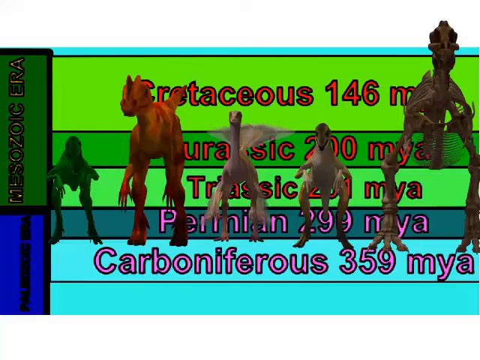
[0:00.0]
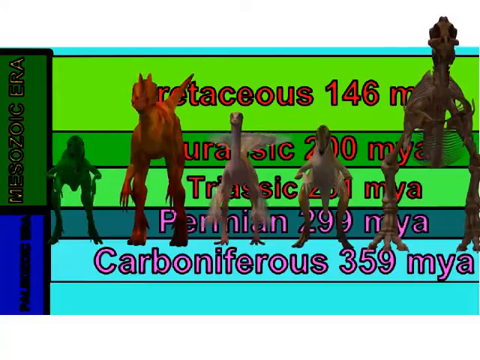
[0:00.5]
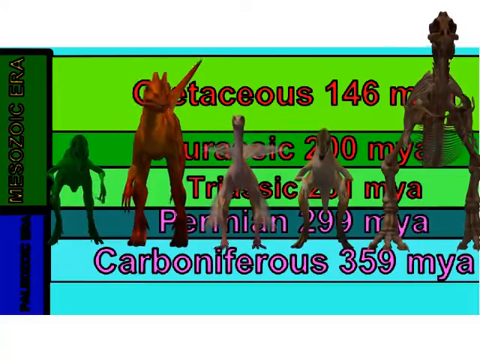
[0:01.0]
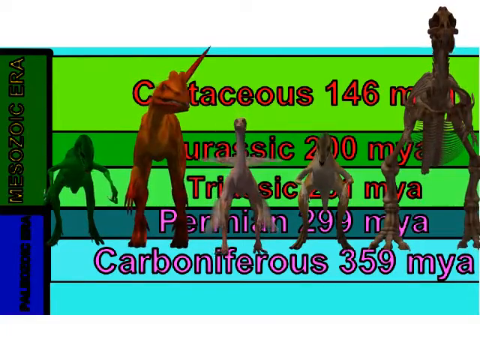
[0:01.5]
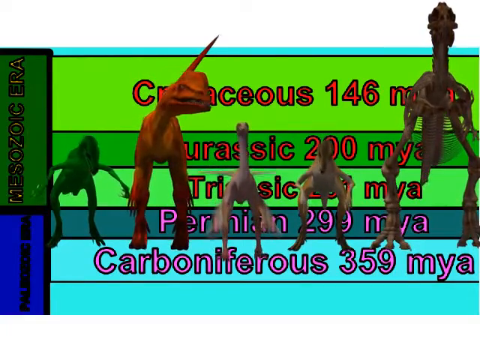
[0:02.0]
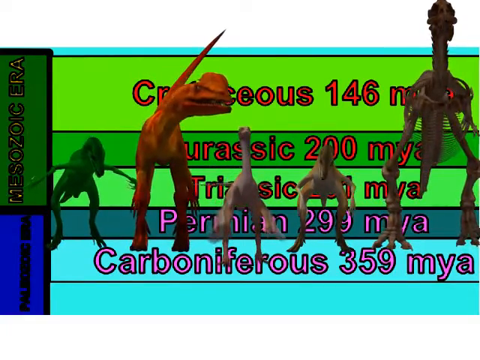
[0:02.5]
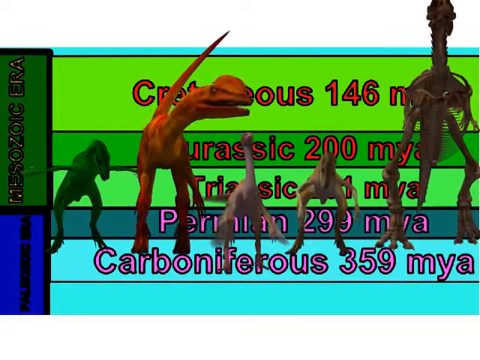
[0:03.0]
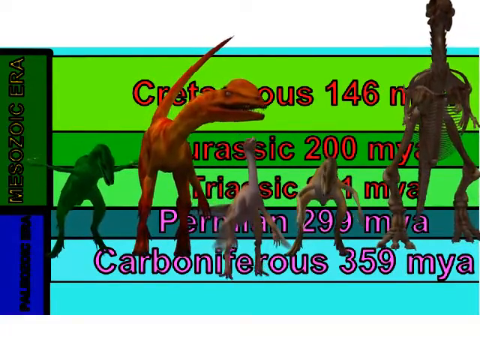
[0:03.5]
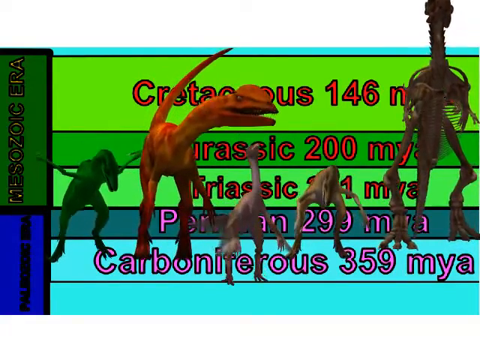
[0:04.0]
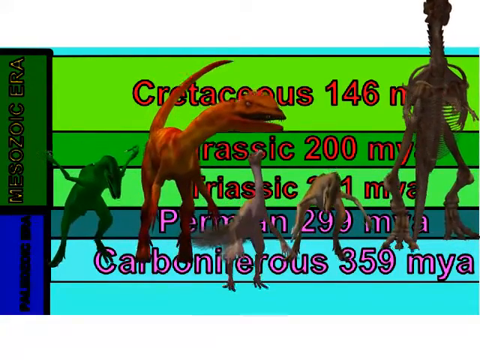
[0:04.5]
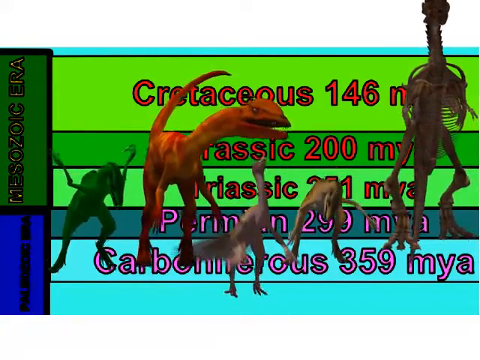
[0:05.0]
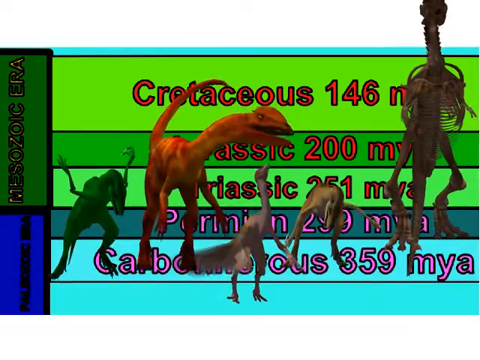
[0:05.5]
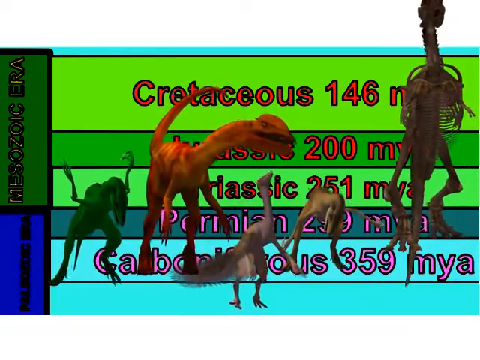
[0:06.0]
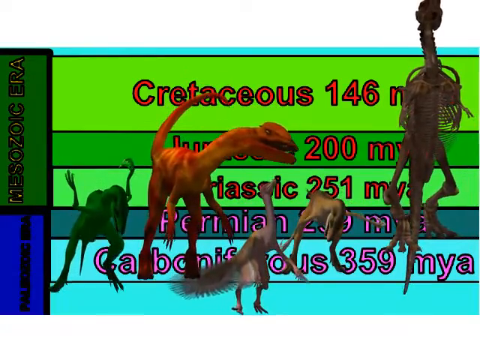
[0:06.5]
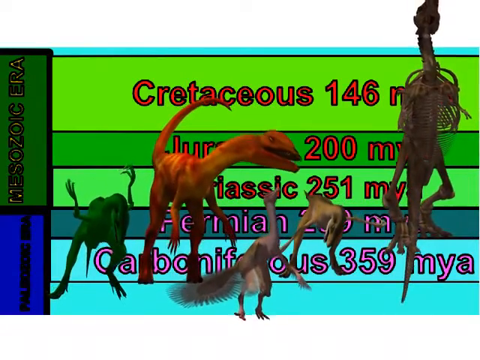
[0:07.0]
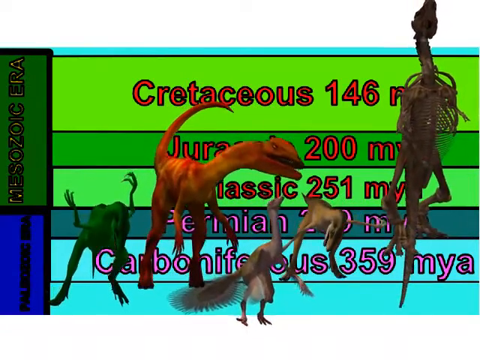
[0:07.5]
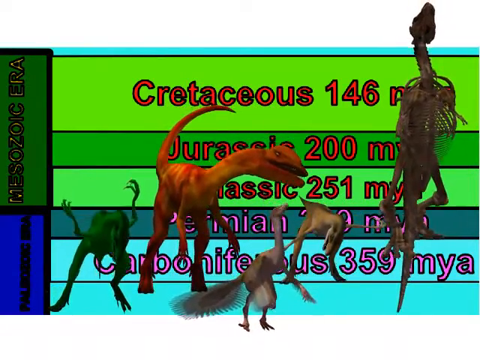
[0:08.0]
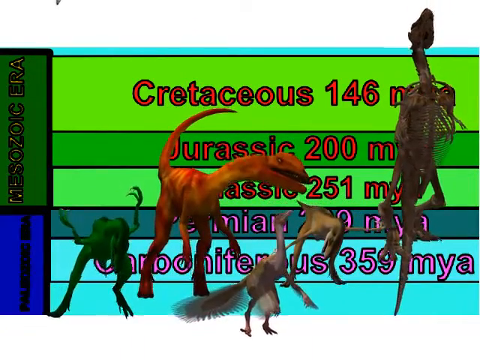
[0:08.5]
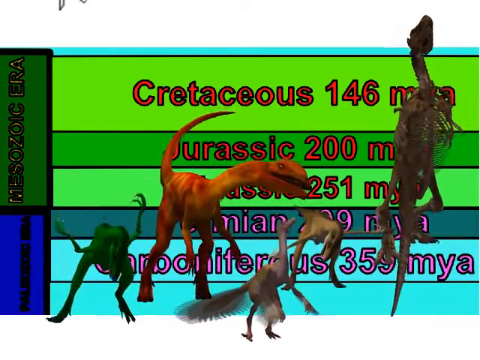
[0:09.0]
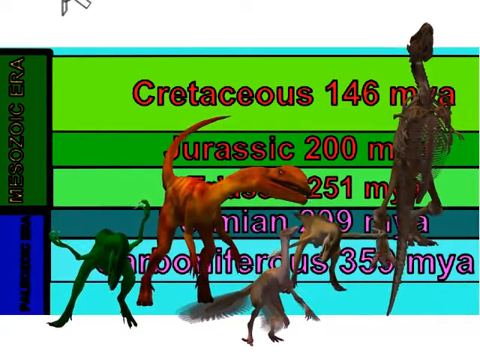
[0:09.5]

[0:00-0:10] About five dinosaurs move rapidly across the screen. Words appear in the background, including "Cretaceous 146", "Carboniferous 359" and "Triassic251". The dinosaurs appear to be the main subject.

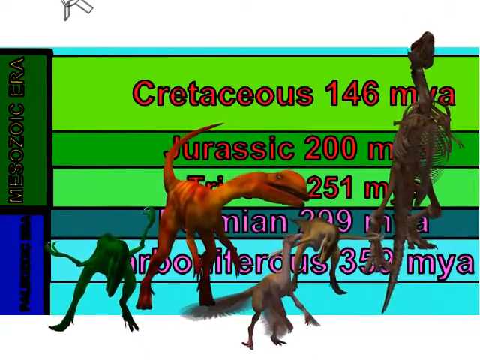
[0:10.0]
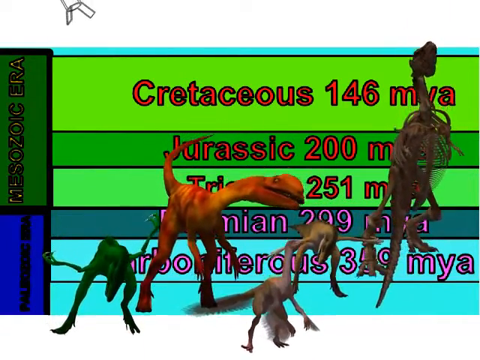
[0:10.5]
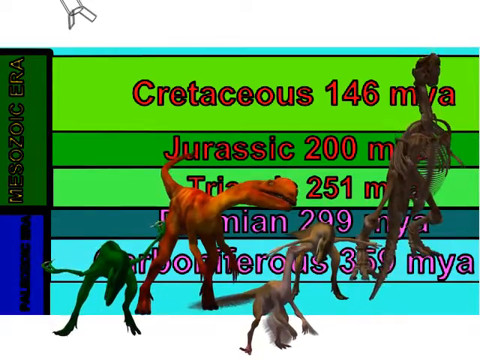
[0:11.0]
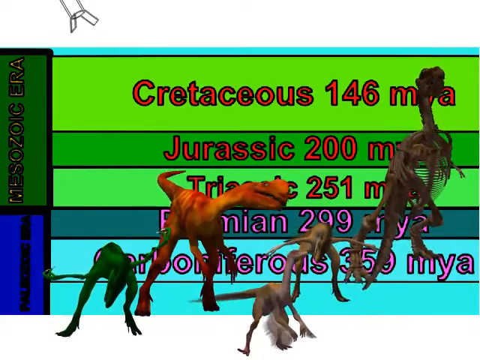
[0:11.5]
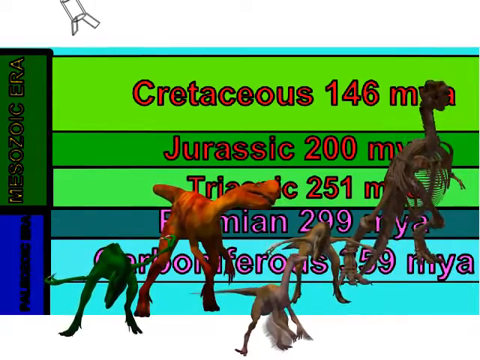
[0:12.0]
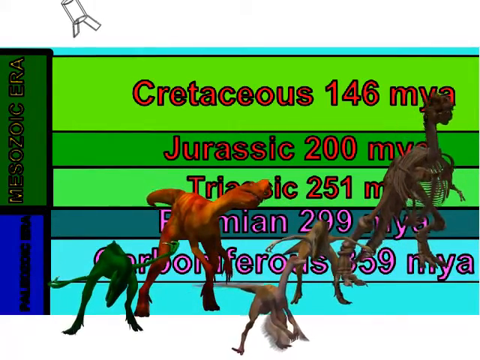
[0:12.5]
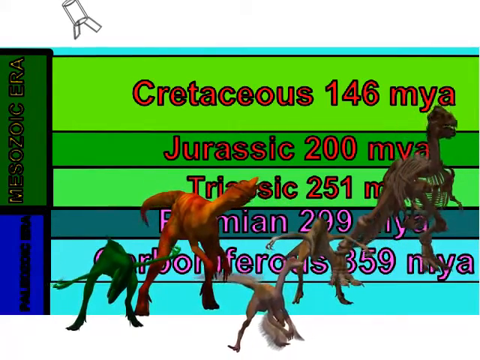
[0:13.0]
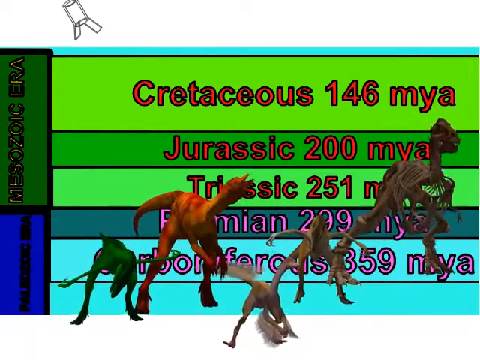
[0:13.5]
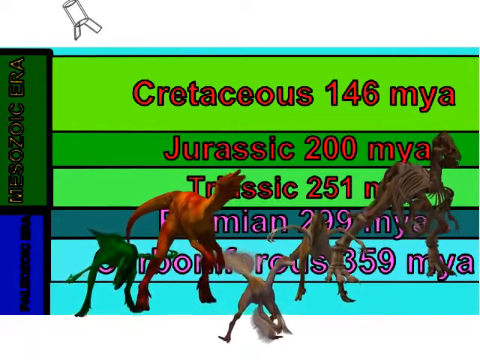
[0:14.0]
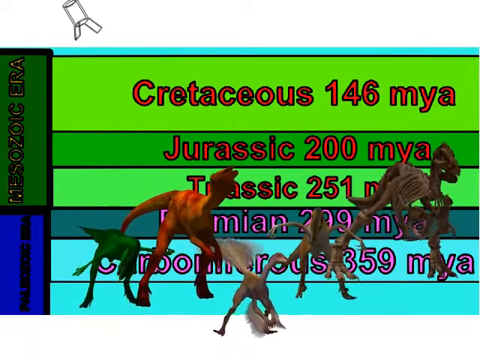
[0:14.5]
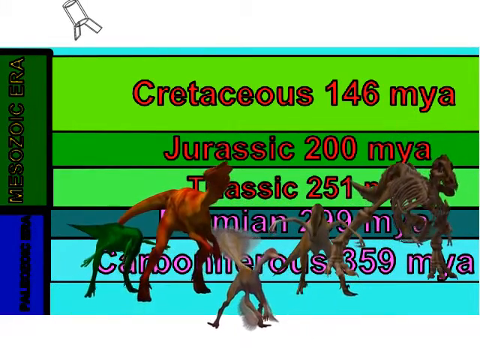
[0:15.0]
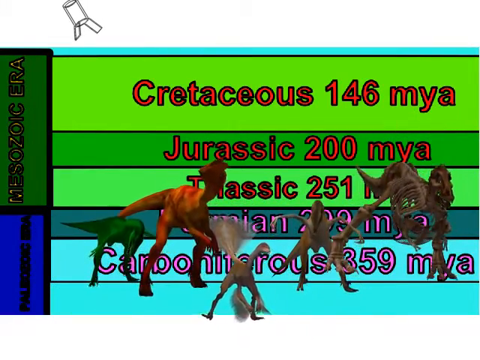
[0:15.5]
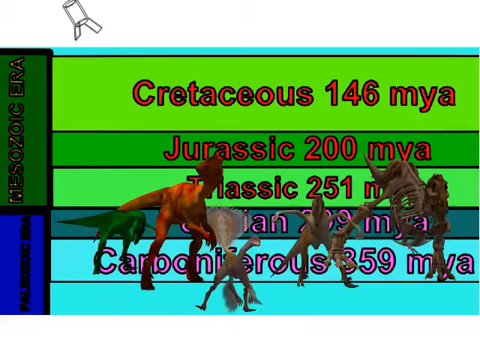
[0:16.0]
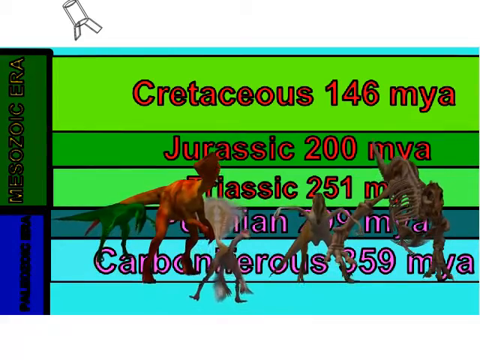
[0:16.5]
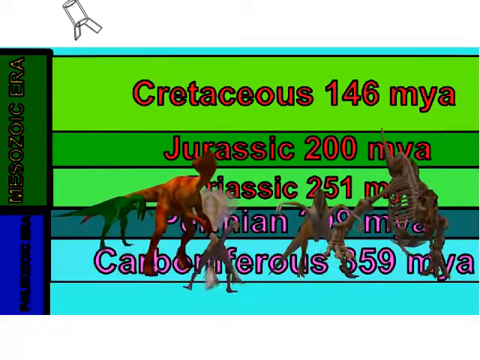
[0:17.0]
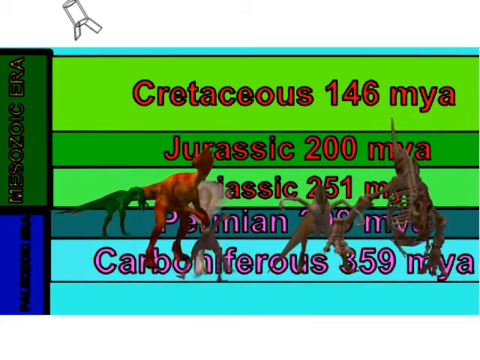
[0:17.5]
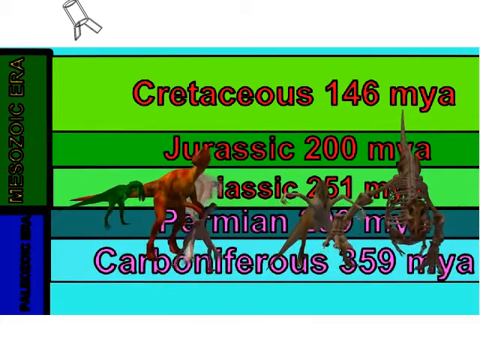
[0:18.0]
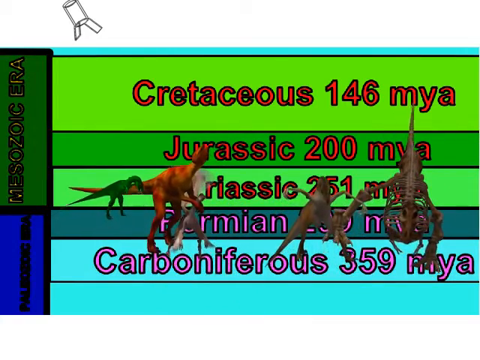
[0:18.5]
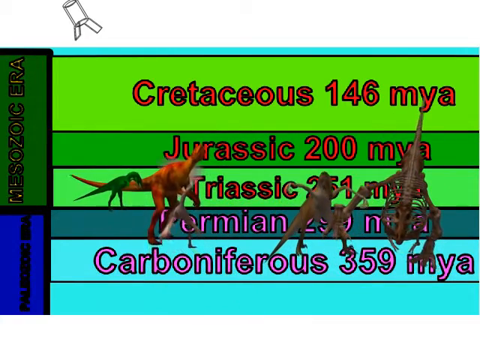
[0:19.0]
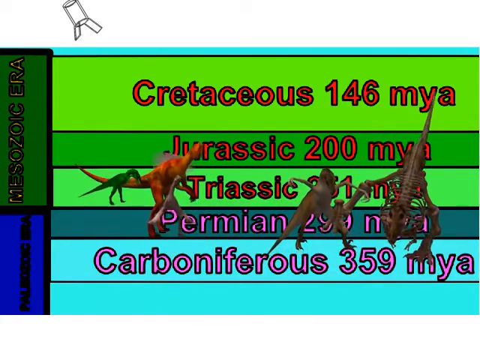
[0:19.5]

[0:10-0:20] The dinosaurs move up and down in slow motion. Words are written in the background, including "Jurassic 200 MYA" and "Triassic 251 MYA"; the names seem to represent the dinosaurs shown. One of the dinosaurs looks like it has wings, and the video appears to be AI-generated. One dinosaur is a bit orange and apparently has a huge mouth, very long compared to those of the other dinosaurs.